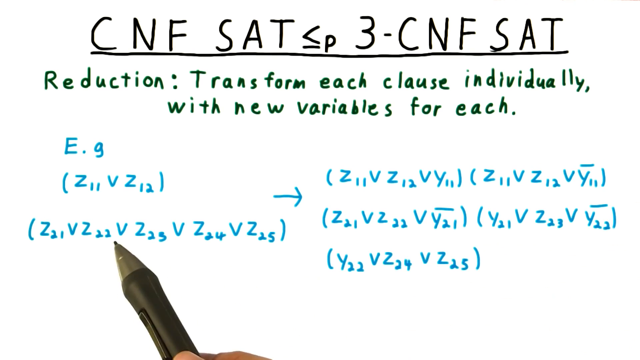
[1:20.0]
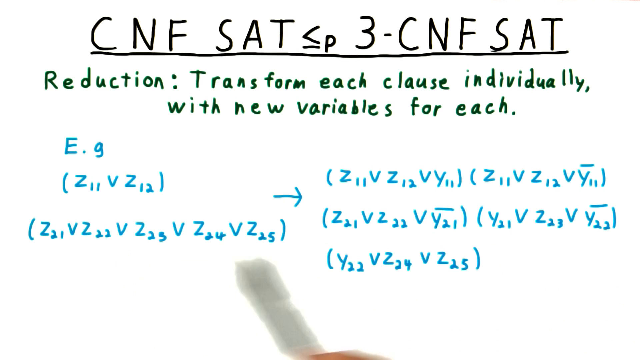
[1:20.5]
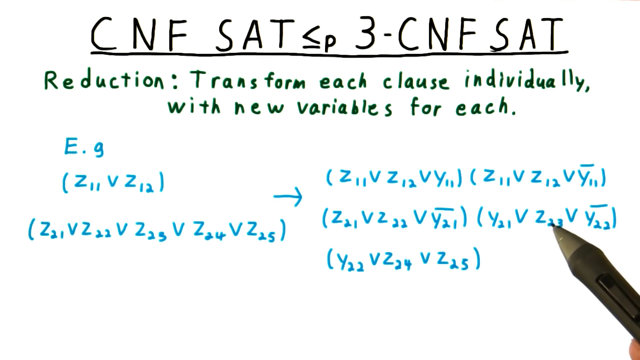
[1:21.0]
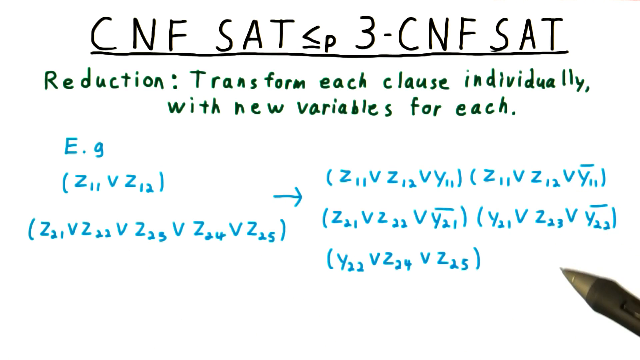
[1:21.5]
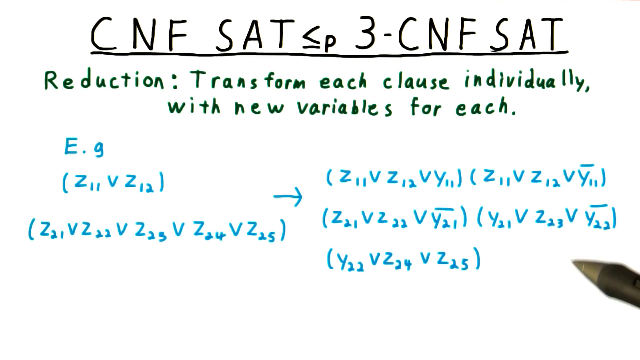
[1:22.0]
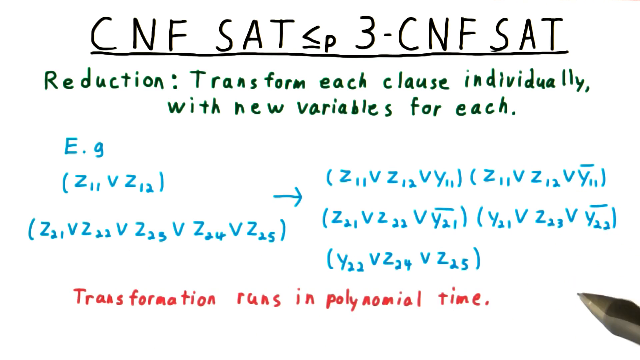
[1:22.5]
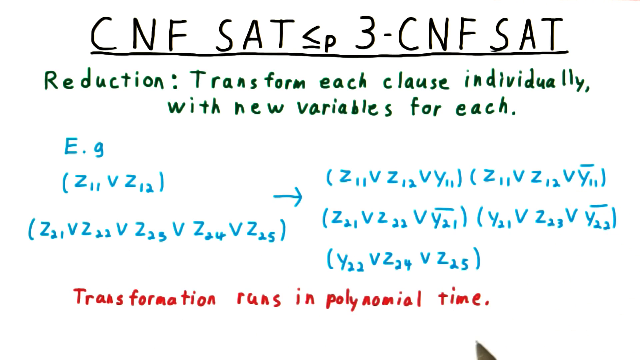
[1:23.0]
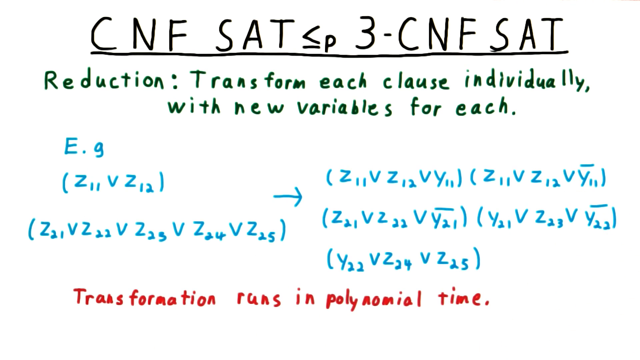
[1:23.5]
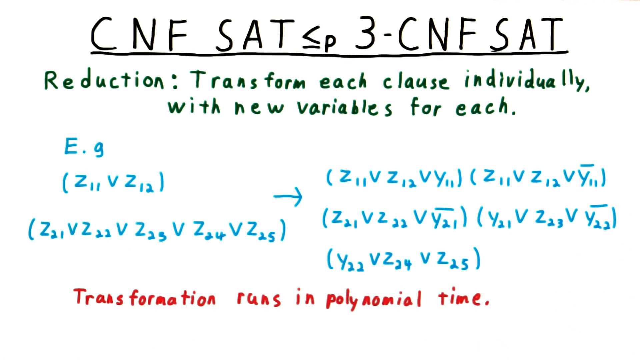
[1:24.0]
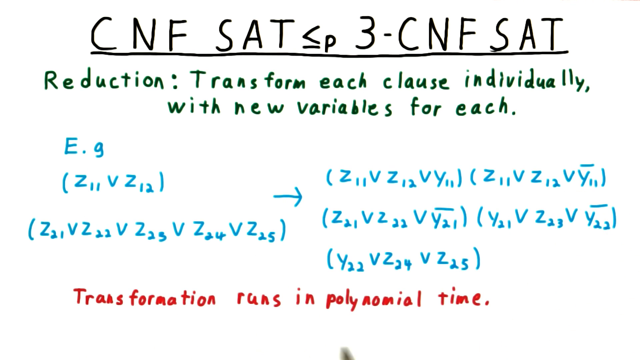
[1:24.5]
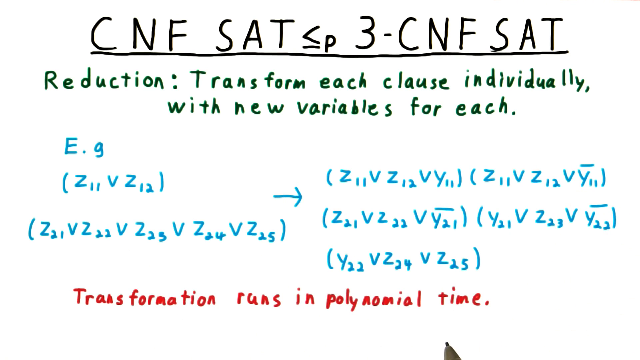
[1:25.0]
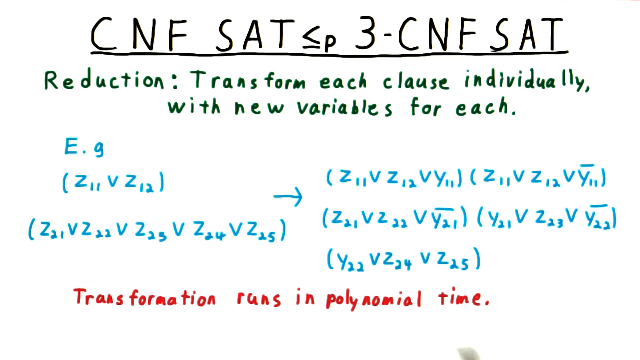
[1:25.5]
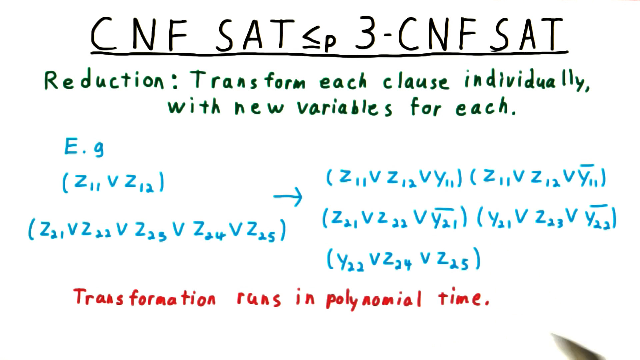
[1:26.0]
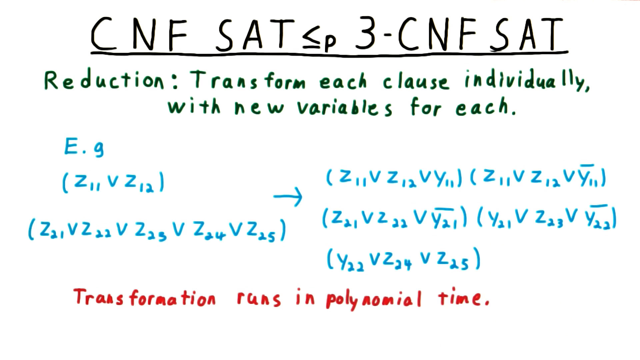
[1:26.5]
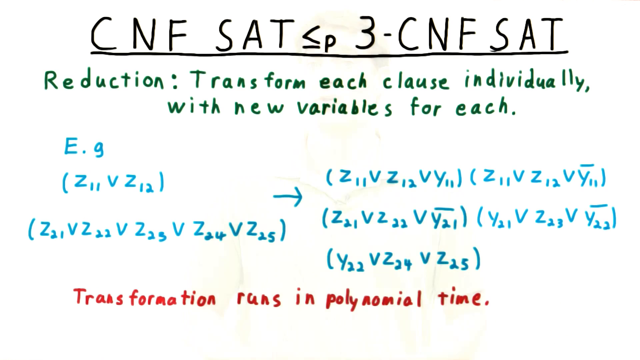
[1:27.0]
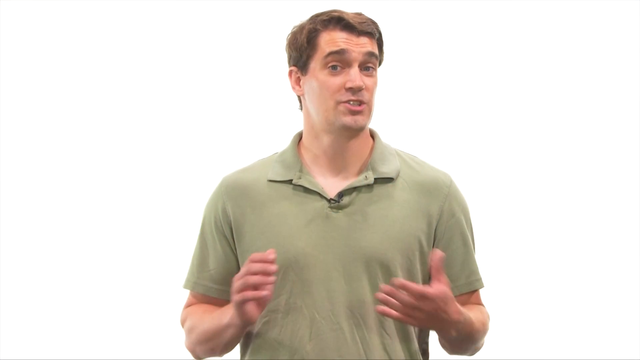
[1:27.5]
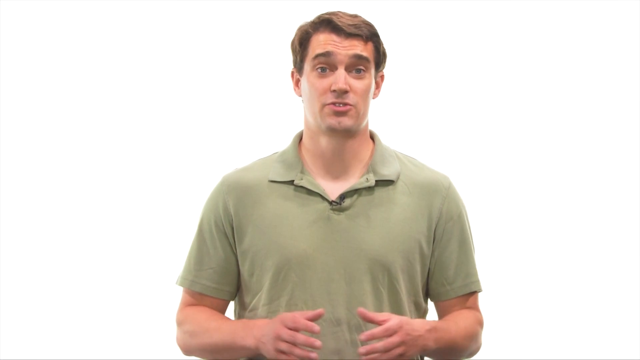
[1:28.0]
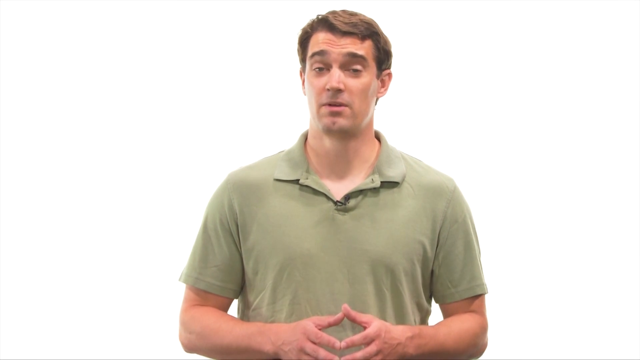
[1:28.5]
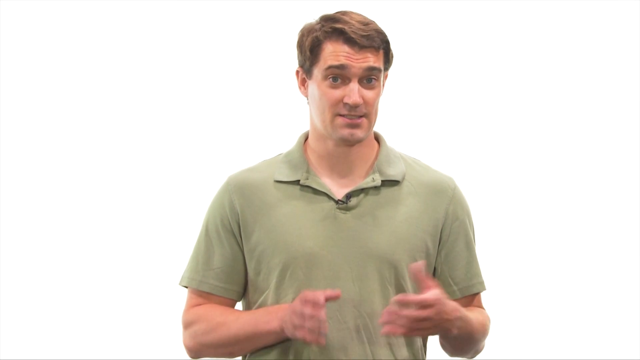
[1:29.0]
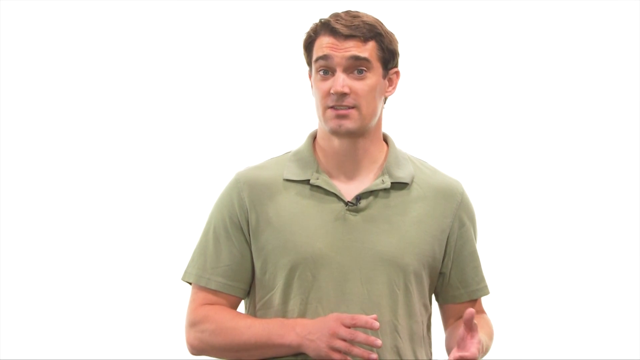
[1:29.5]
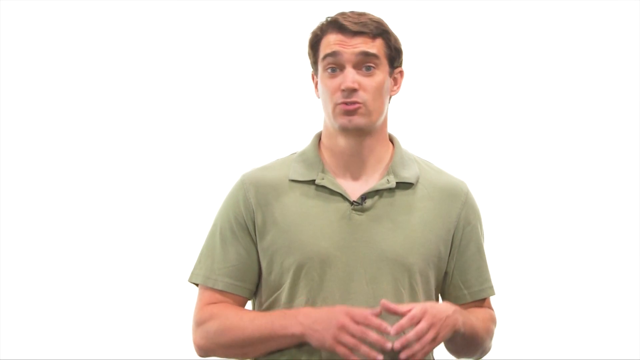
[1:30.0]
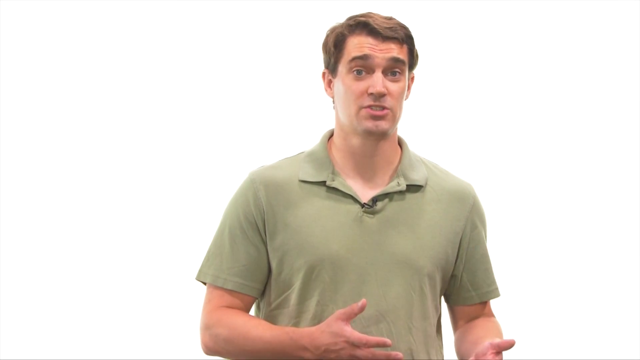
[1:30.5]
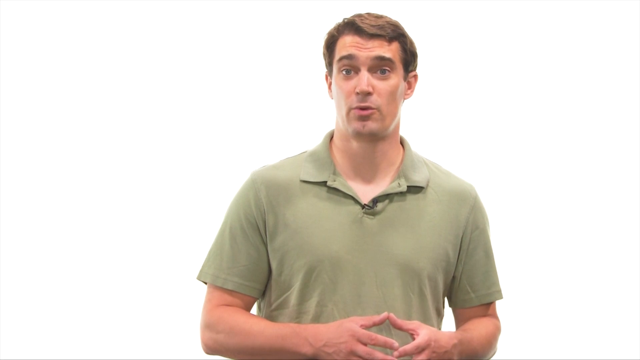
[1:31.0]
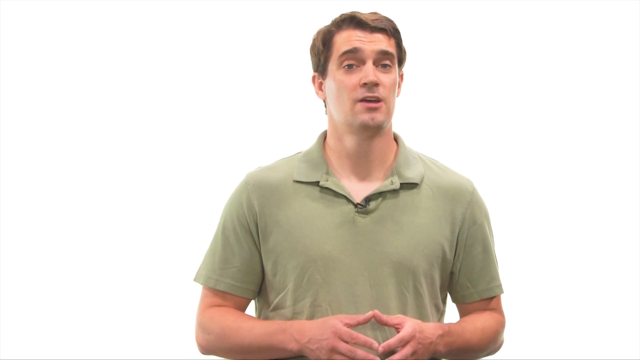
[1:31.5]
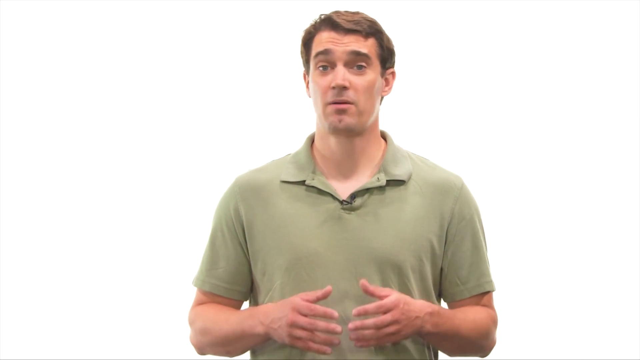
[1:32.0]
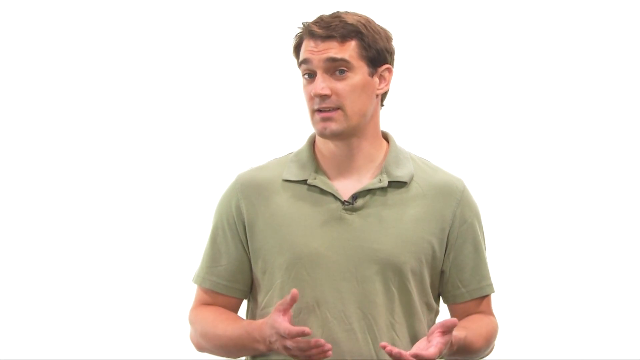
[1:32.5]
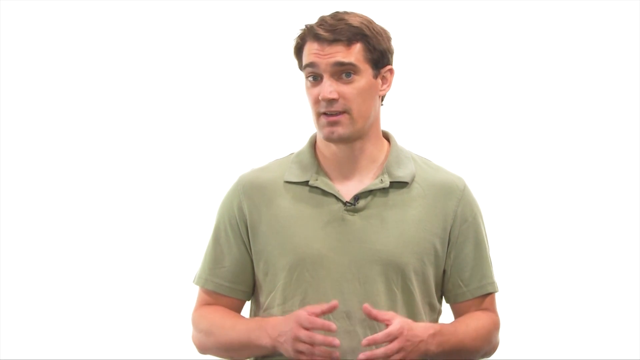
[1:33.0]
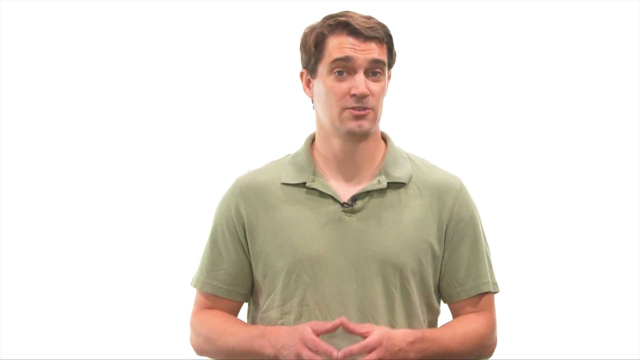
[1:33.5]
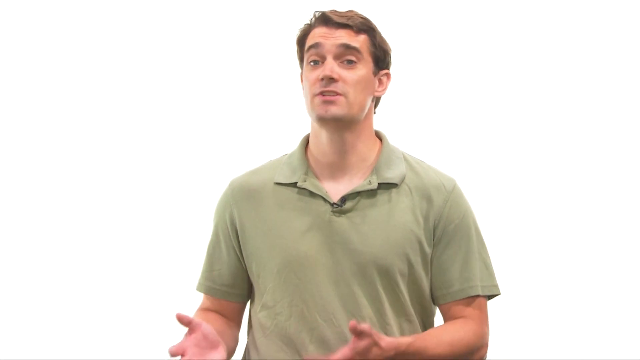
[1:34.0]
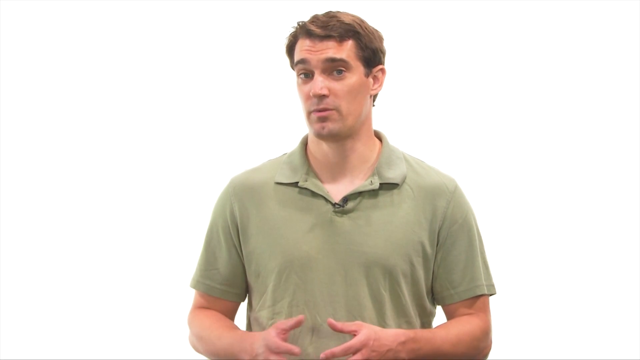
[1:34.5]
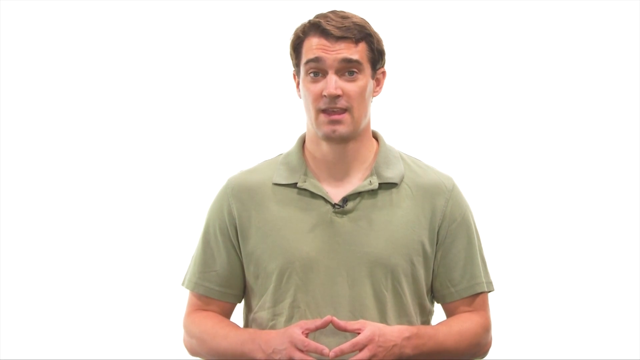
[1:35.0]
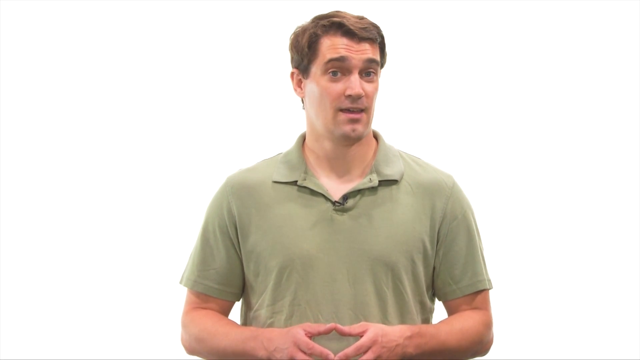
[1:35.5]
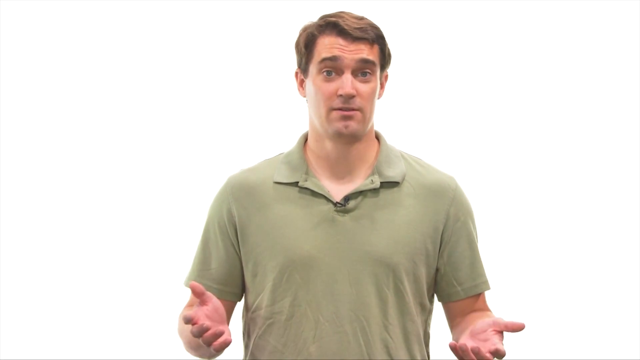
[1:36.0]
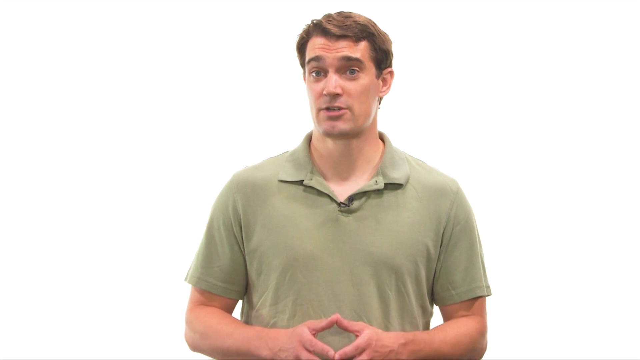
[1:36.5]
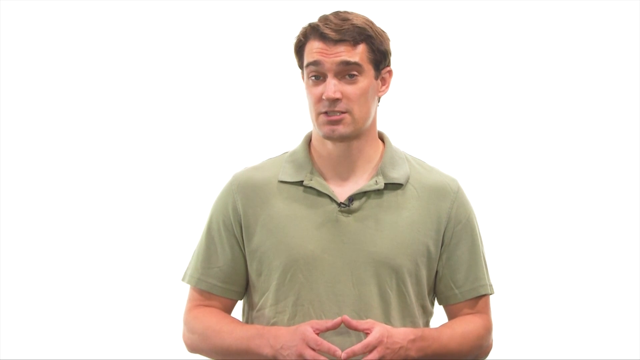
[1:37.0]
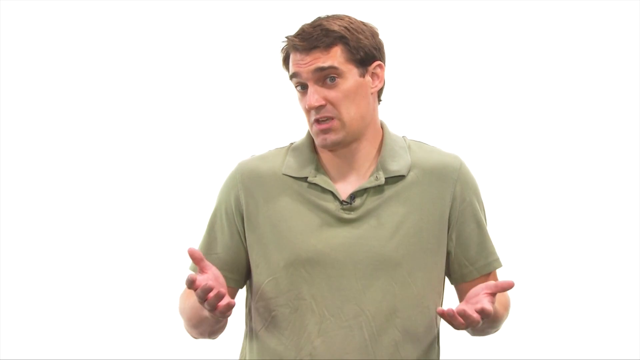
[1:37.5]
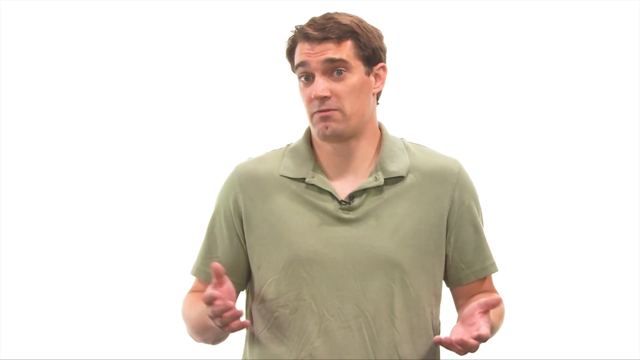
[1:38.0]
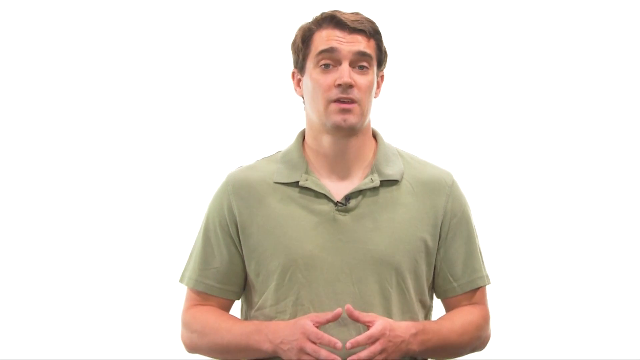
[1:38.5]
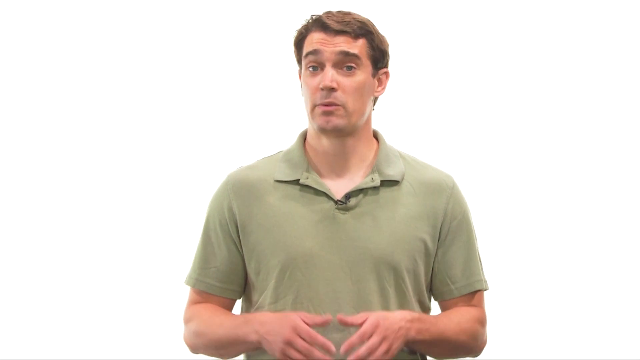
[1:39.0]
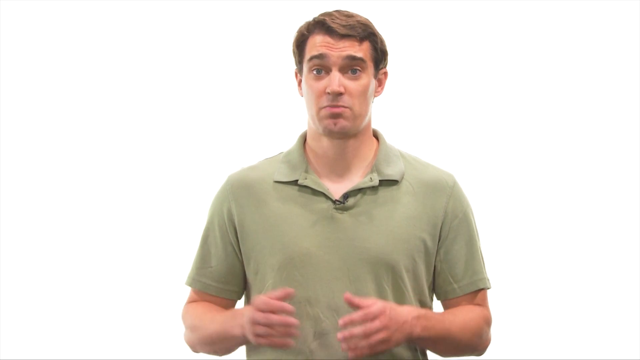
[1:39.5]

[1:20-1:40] At first the mechanical pencil is not visible, then it comes up from the bottom right and around the corner of all the writing on the screen. It moves continuously up and down, goes to the left, and then comes back to point at the right side. The pen is removed, and red text appears at the bottom reading "transformation runs in polynomial time." It shows briefly on the white page before everything fades out to another white background, this time with a man in an olive colored shirt with short brown hair talking toward the camera. He has a very interesting expression on his face. He moves his hands around, opening and closing them and bringing them back to his stomach area, and also opens his hands and shrugs toward the camera, gesturing as he speaks.